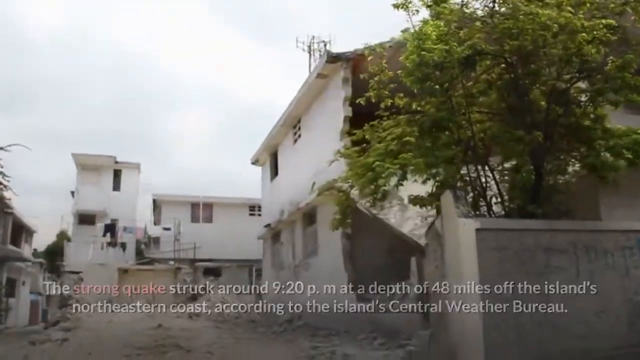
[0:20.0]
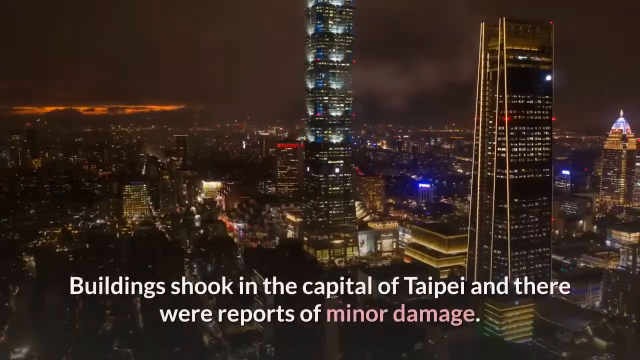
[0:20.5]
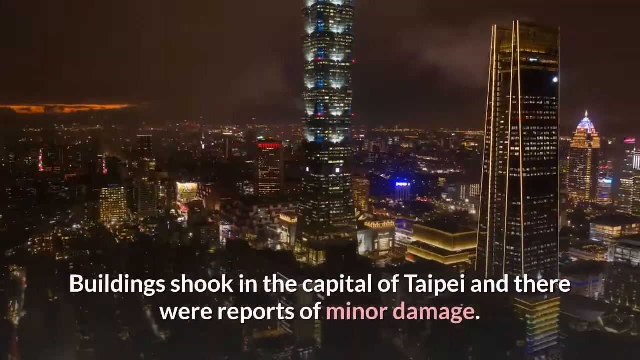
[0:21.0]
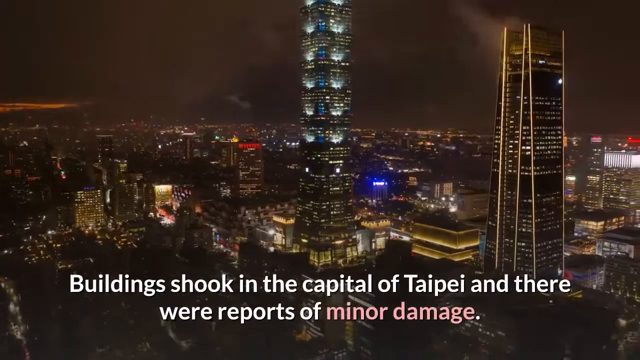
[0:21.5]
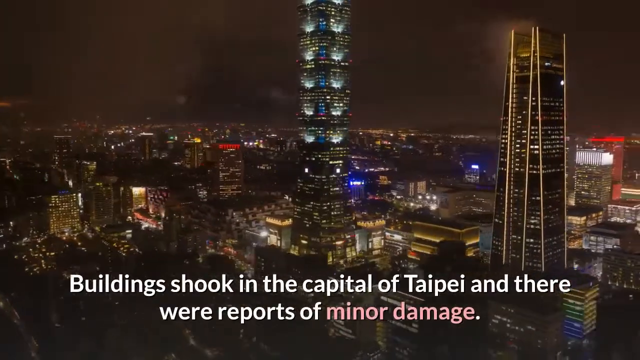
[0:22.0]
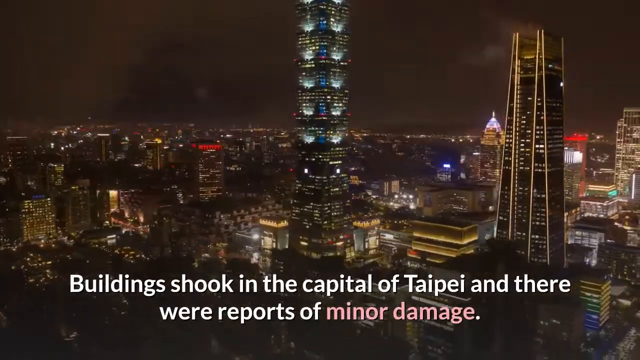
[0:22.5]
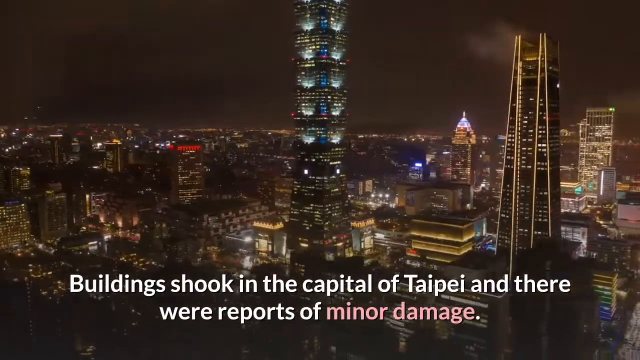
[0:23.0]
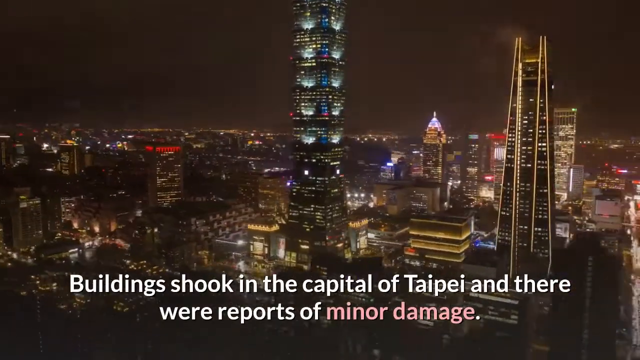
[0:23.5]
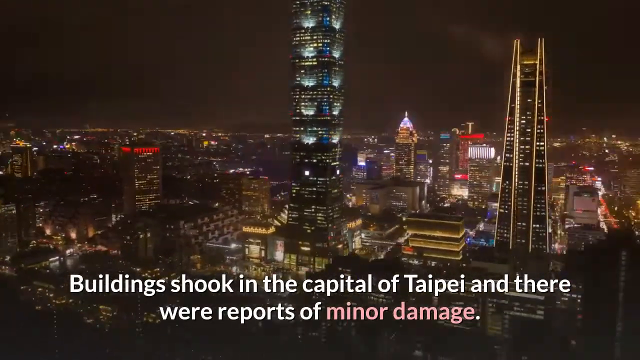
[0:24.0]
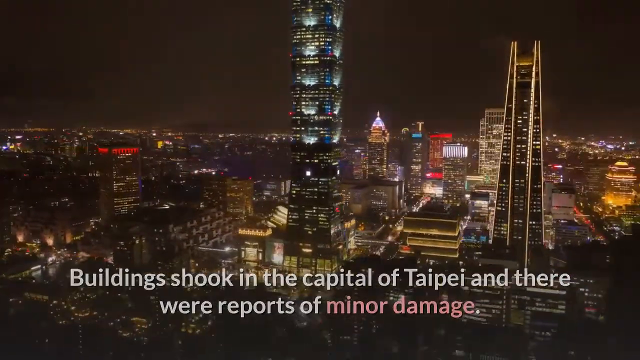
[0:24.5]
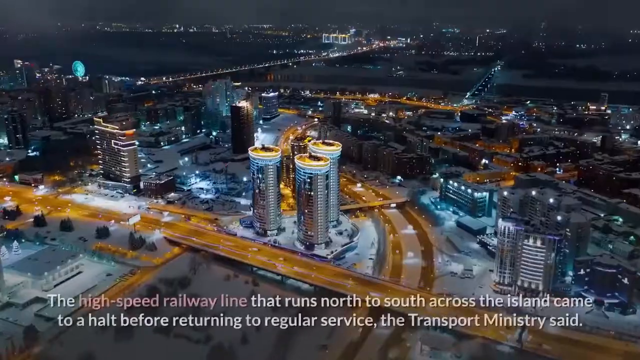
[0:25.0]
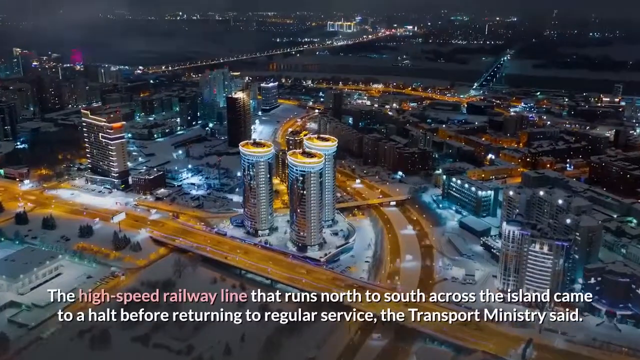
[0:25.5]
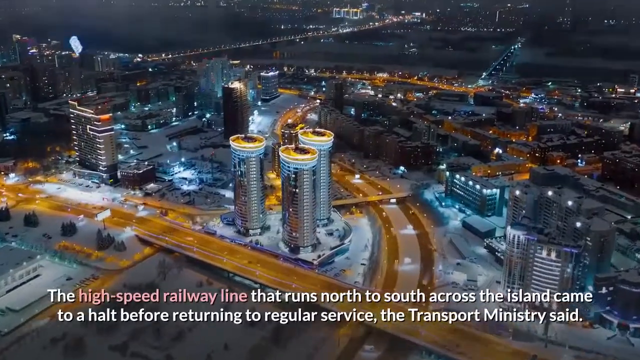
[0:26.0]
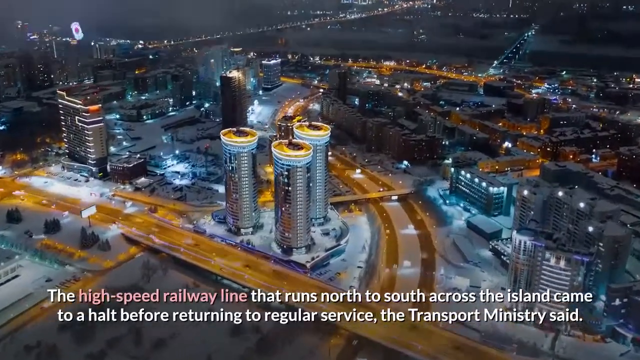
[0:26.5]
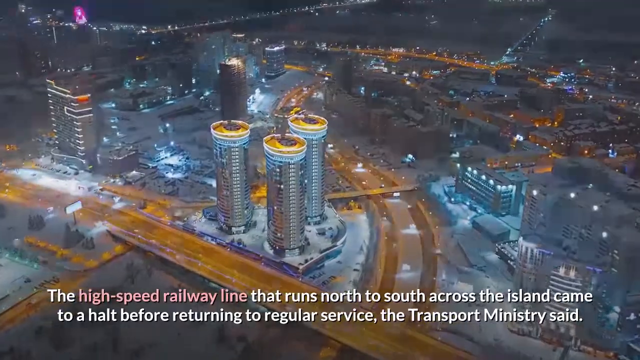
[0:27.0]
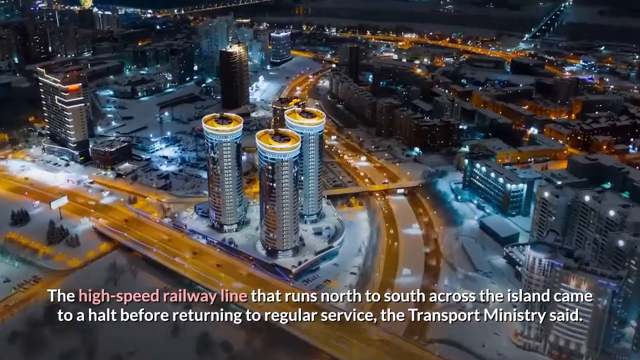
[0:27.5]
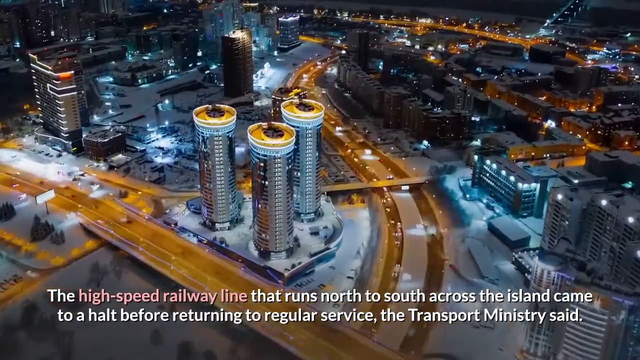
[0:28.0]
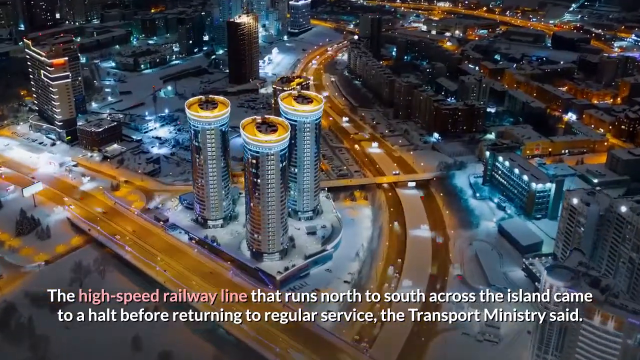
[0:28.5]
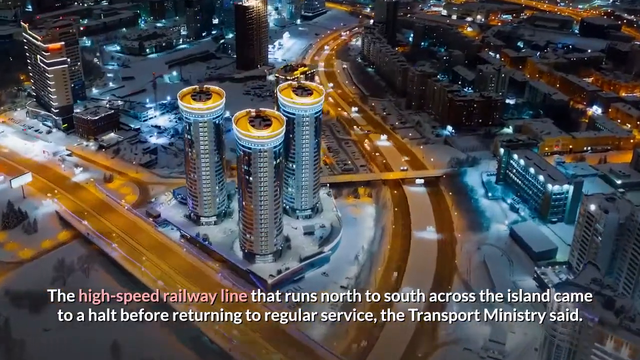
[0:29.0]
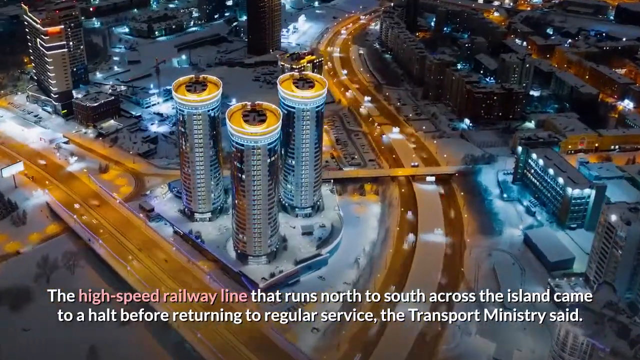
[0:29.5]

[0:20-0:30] The view is zoomed into the city center, with a statement reading: "buildings shook in the capital of Taipei and there were reports of minor damage." The camera shows the city from different angles, and large flats buildings with illuminating lights appear. A statement at the bottom reads: "the high-speed railway line that runs north to south across the island came to a halt before returning to regular service. The transport ministry said." The railway and the surrounding buildings are then shown.